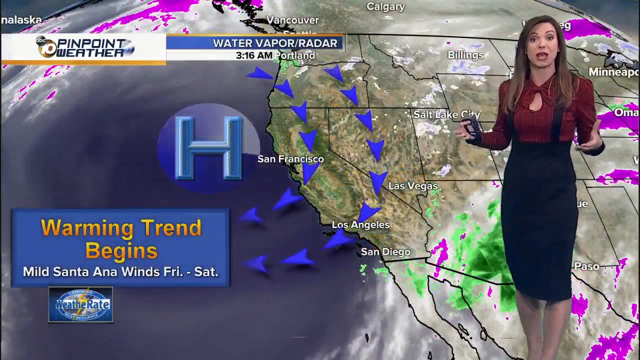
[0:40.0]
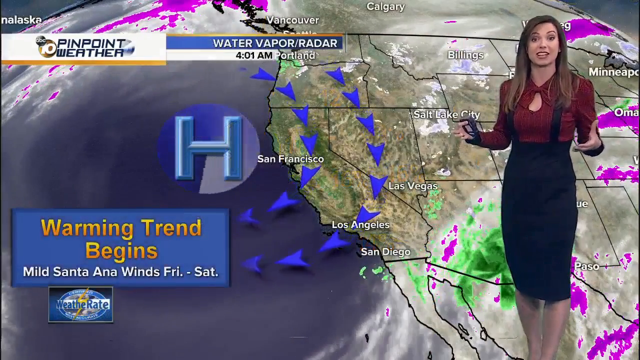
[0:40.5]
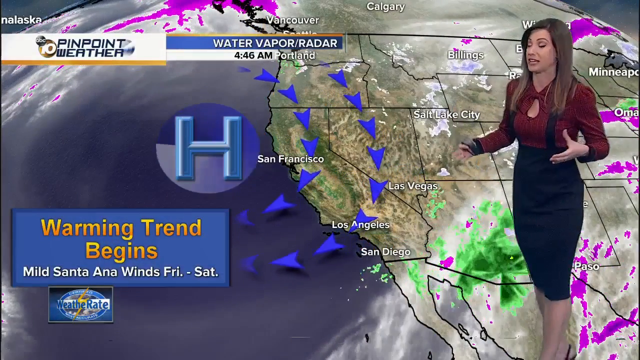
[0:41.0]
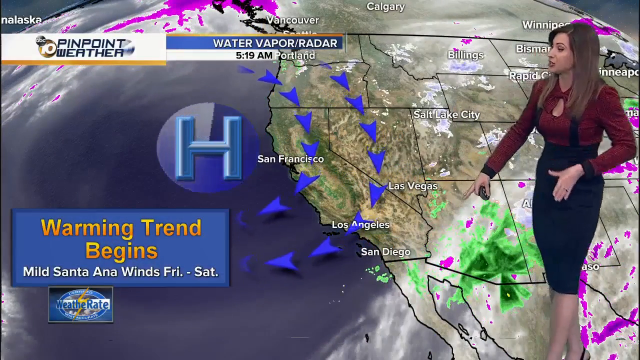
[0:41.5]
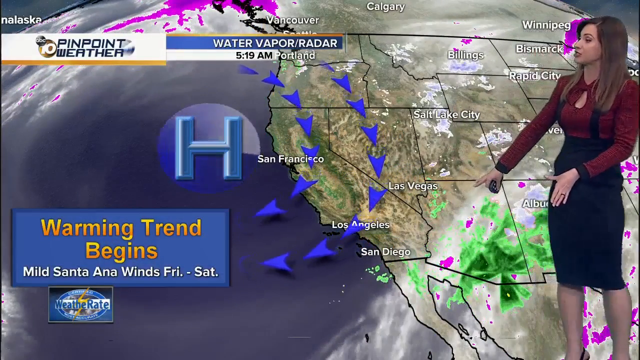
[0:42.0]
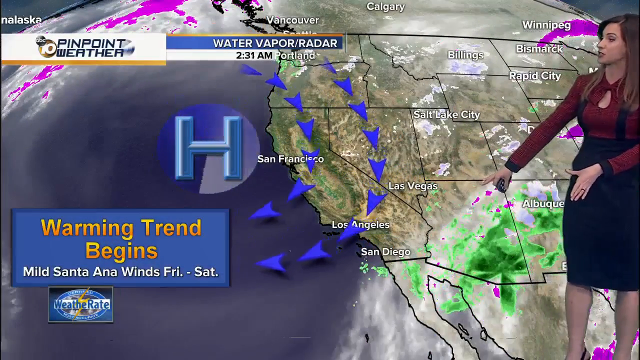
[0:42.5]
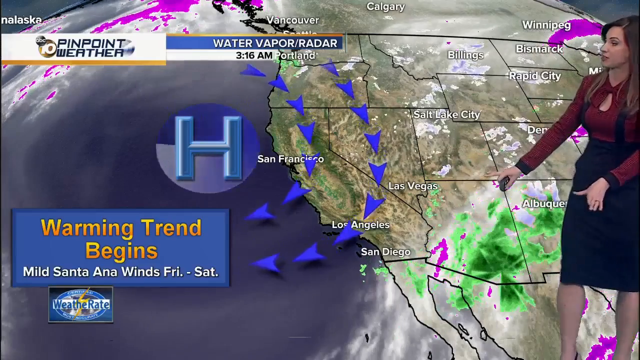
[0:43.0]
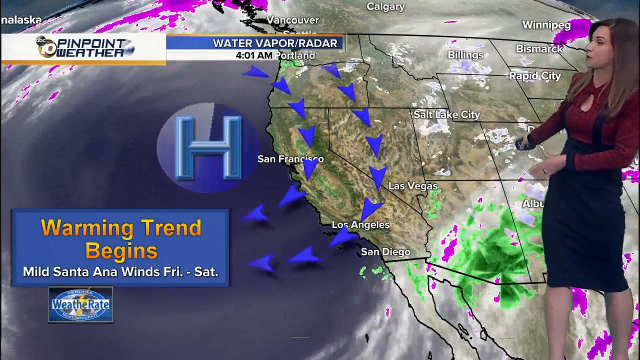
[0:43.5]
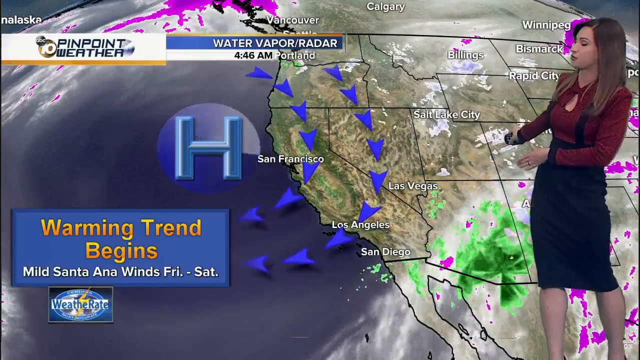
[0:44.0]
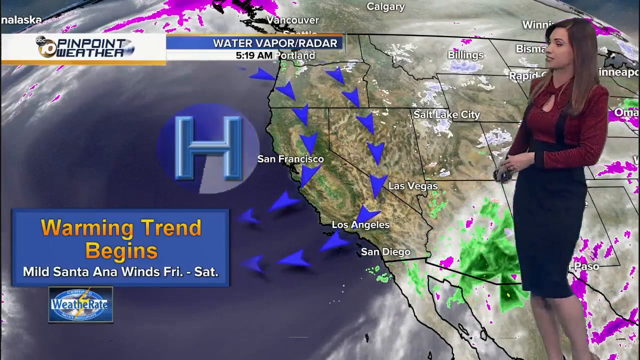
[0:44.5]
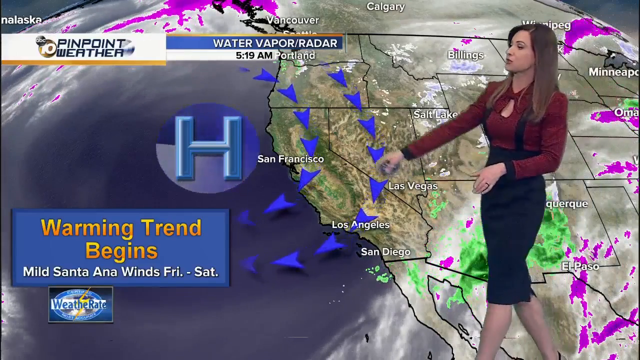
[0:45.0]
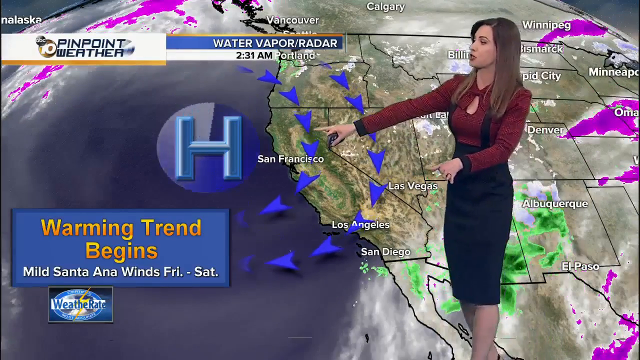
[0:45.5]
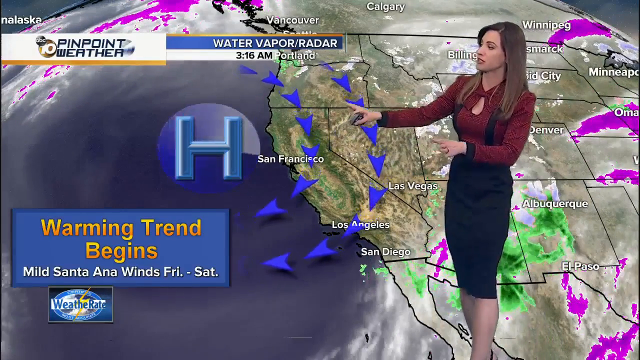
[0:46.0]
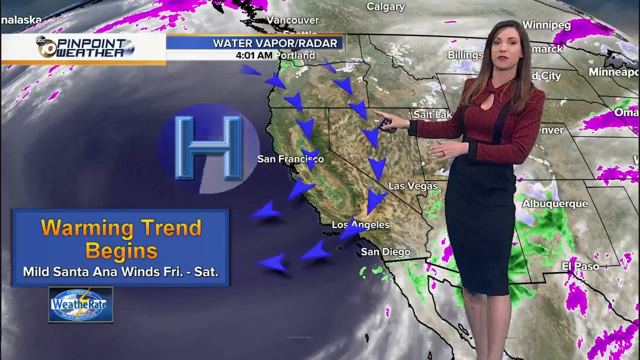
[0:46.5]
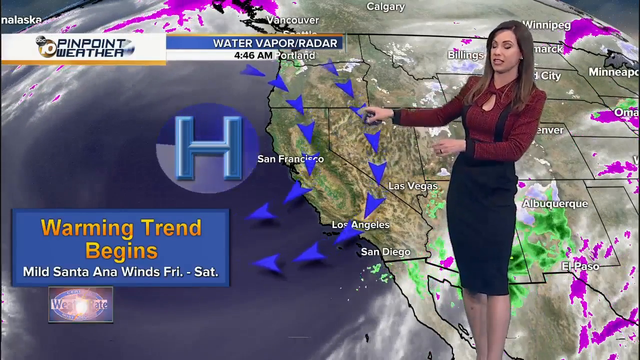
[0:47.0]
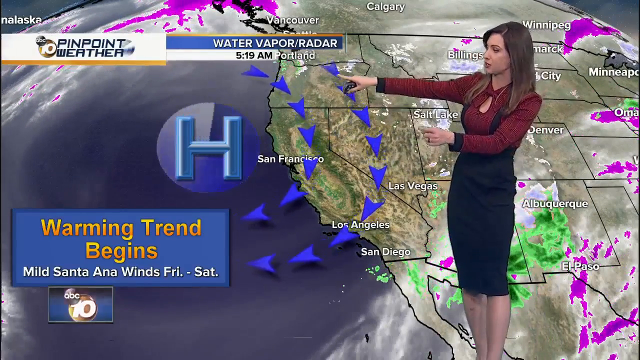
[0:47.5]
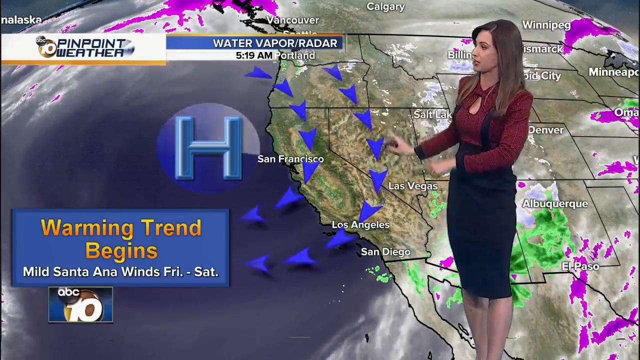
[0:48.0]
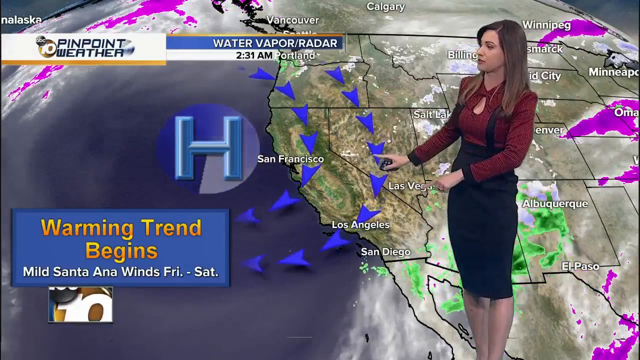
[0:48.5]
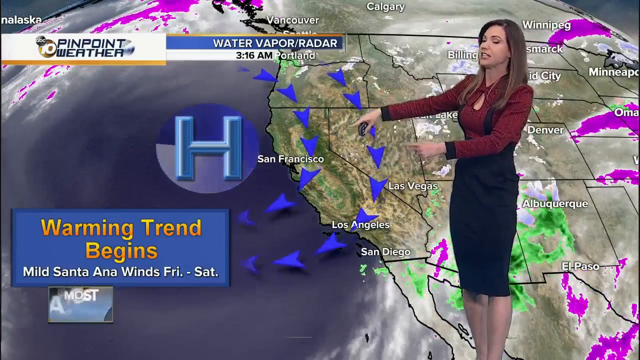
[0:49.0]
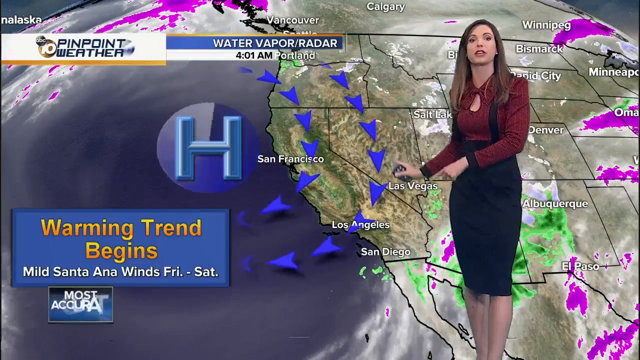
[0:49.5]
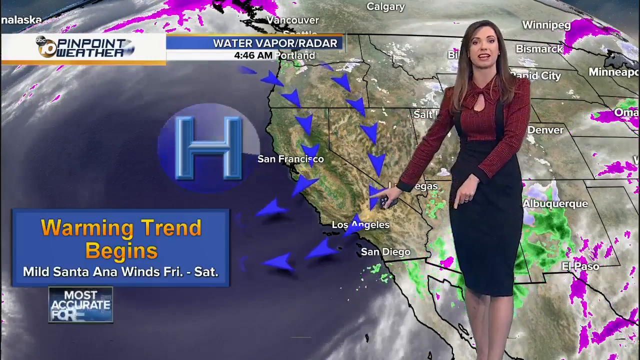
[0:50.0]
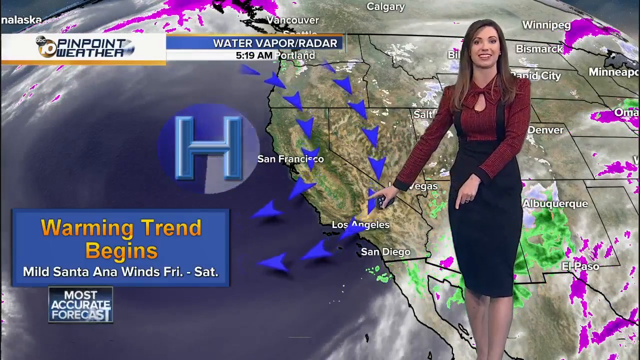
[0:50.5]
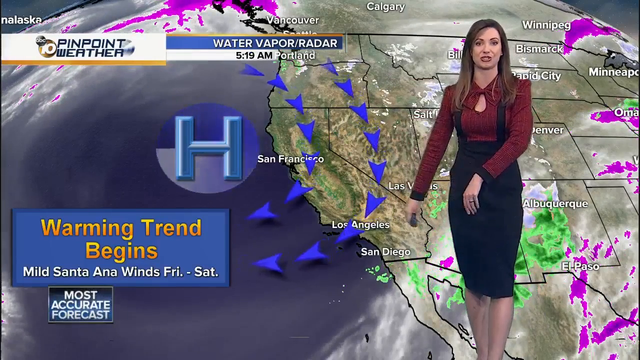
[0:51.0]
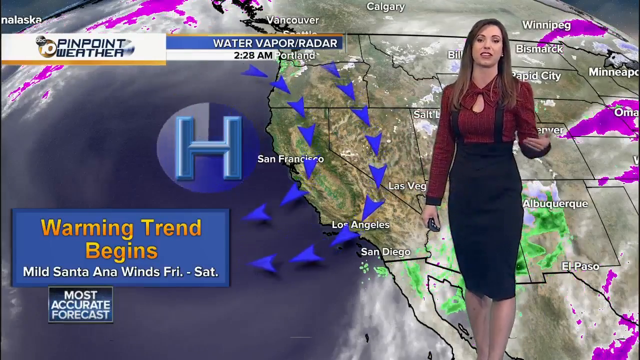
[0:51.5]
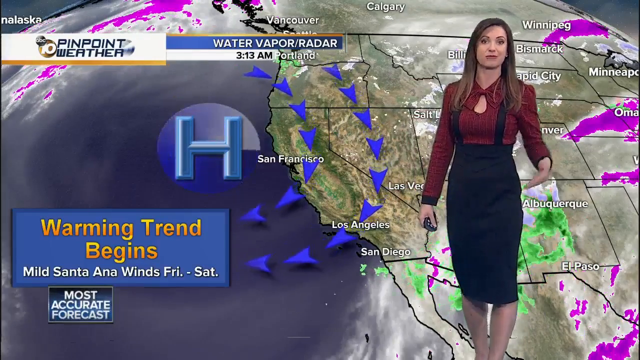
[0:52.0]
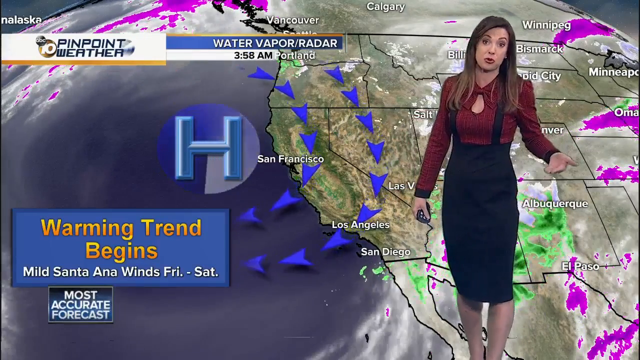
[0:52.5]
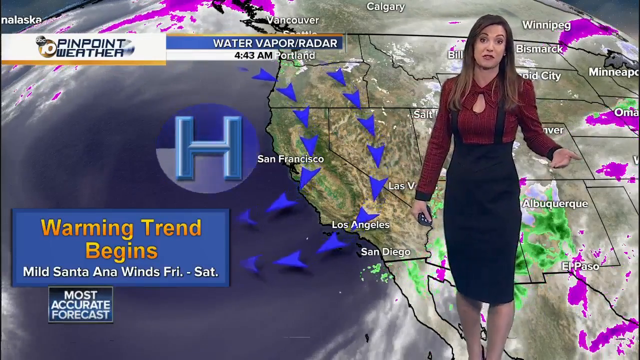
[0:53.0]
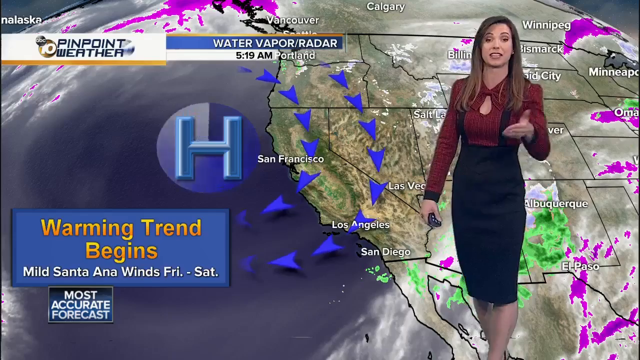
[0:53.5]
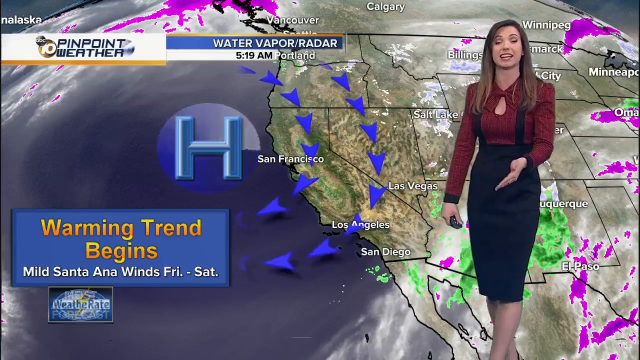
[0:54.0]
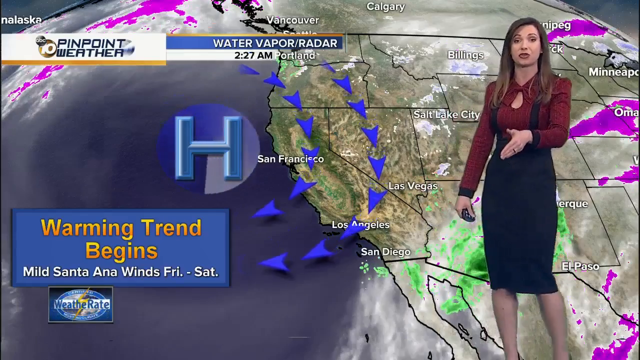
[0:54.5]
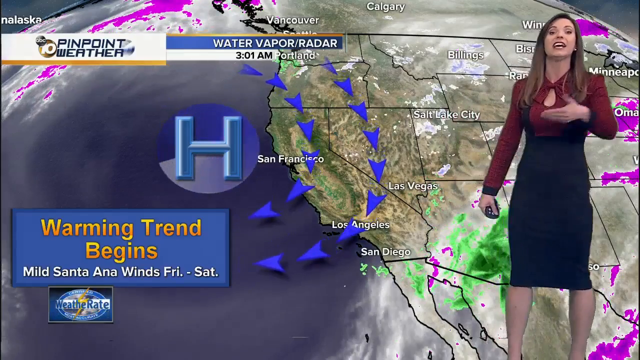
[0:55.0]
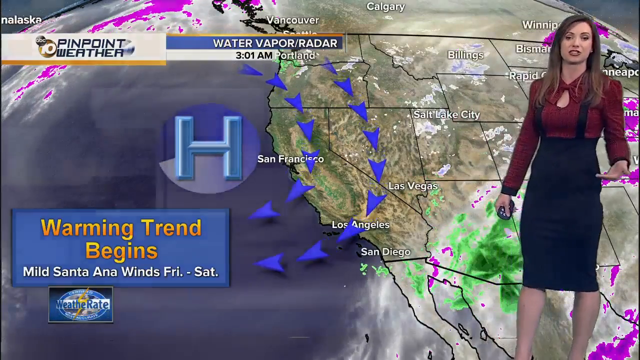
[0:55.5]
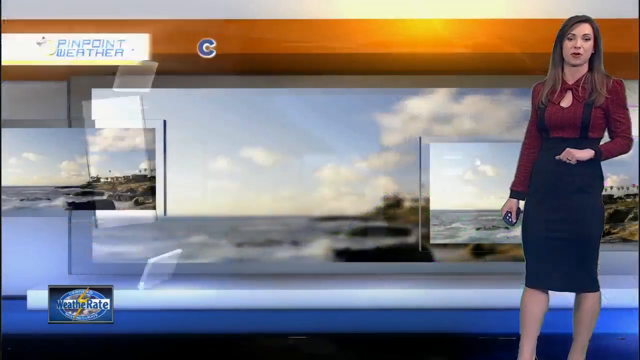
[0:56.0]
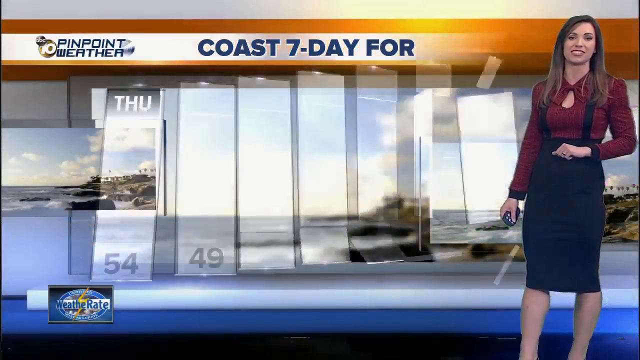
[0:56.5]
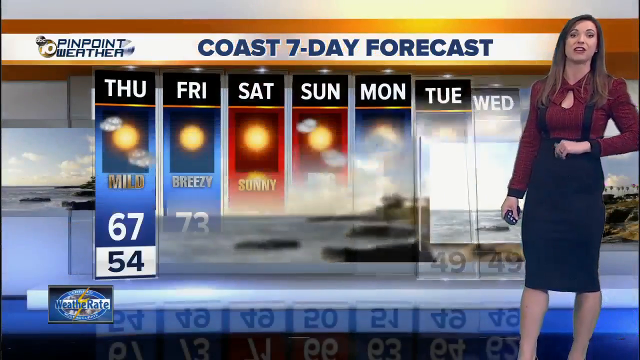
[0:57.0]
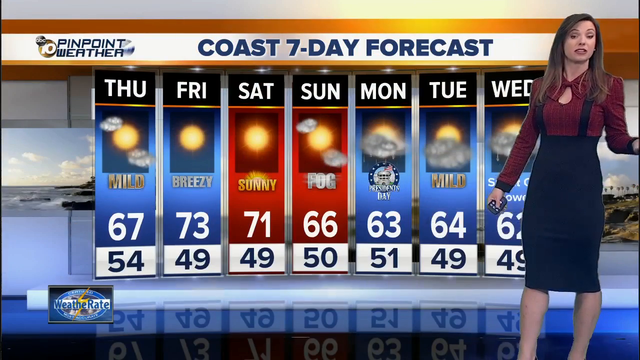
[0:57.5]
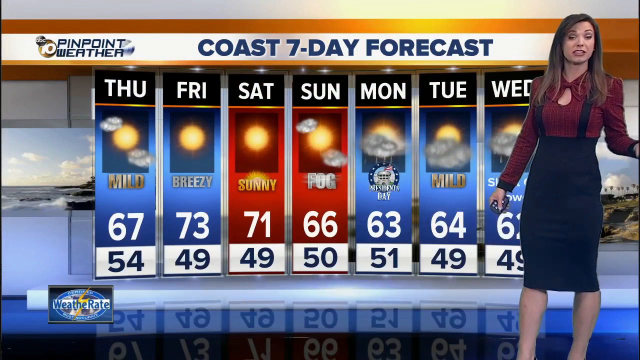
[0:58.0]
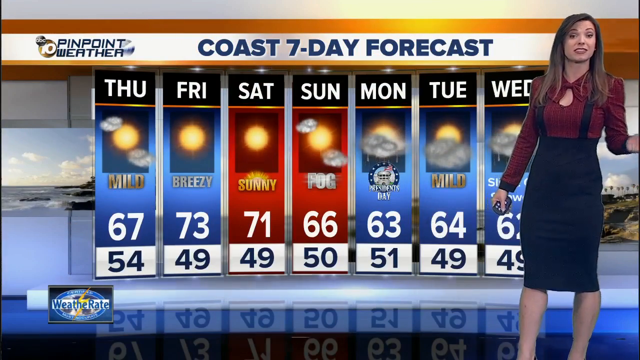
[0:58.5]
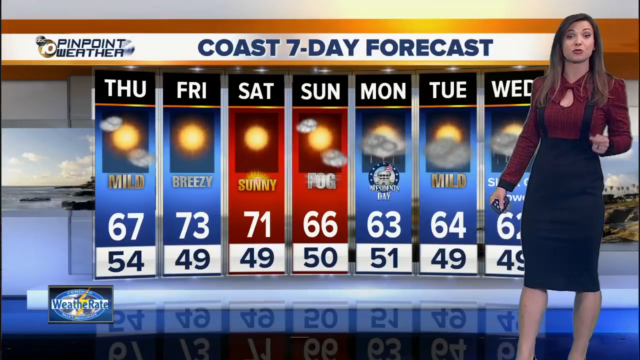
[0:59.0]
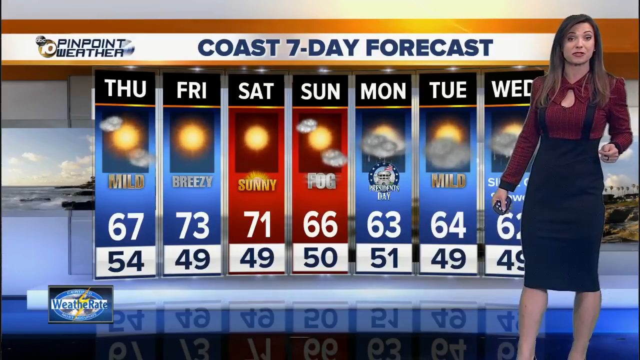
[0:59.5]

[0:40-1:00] The map behind the presenter continues to change, now with more orange, green and blue, and then changes again to show the latest numbers for the cities on the map. Next, a bar graph appears with numbers and information inside each tab, and a row of numbers indicates the temperatures. The display then changes to something like the map again, in blue with a deep blue "H" inside. On the left side is a strip of information reading "a warming trend begins", written in gold. On the right side the map continues with greenish backgrounds, with purple, green and blue colors standing out.